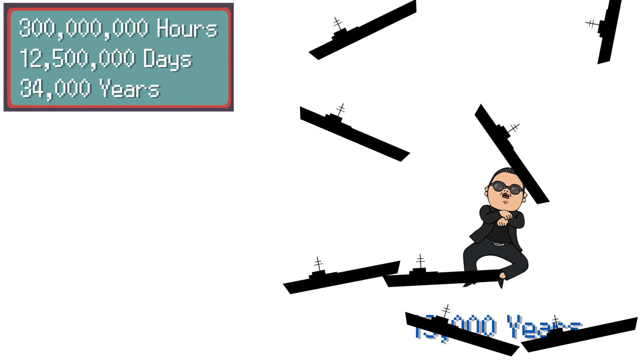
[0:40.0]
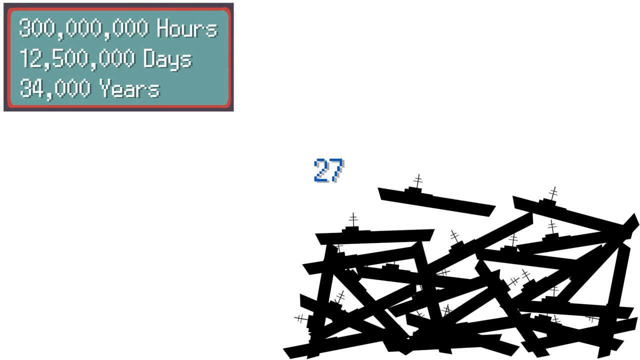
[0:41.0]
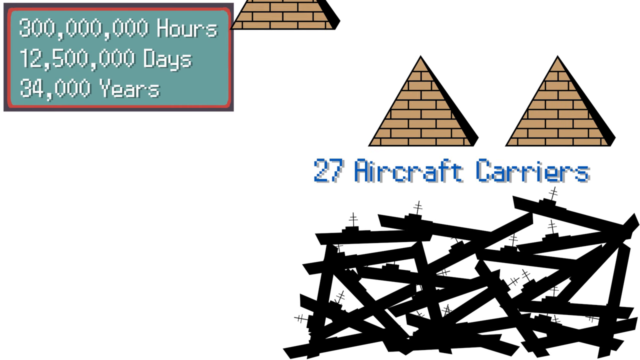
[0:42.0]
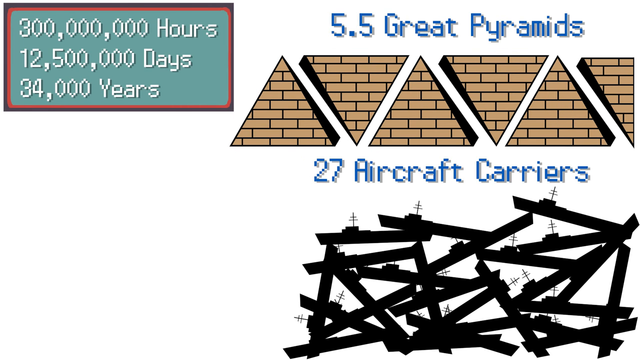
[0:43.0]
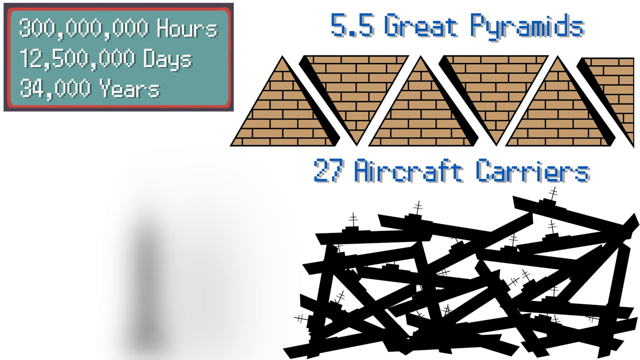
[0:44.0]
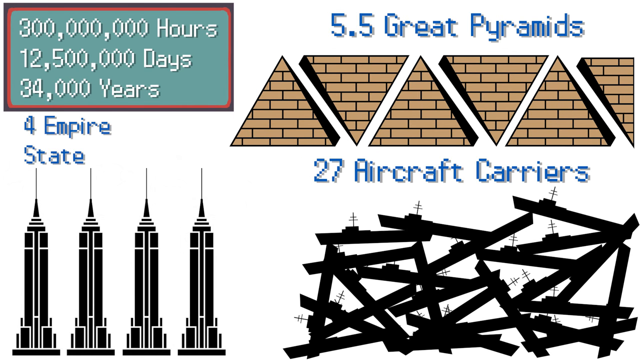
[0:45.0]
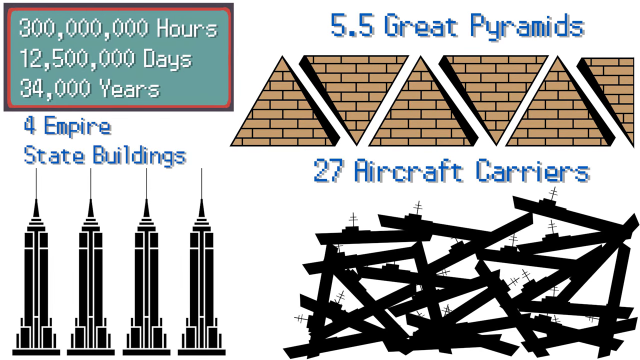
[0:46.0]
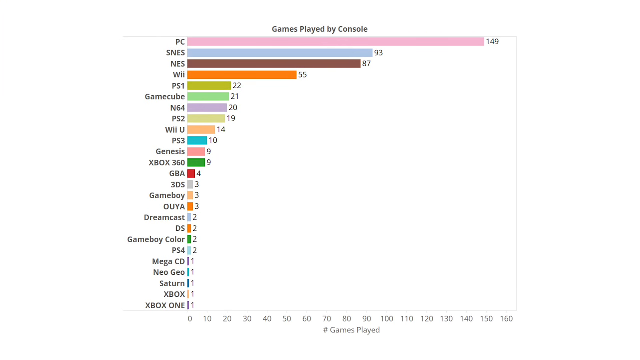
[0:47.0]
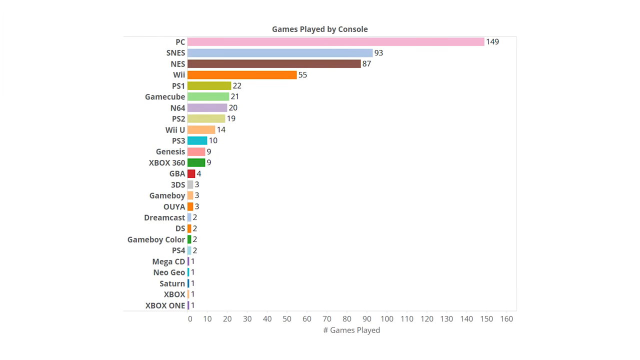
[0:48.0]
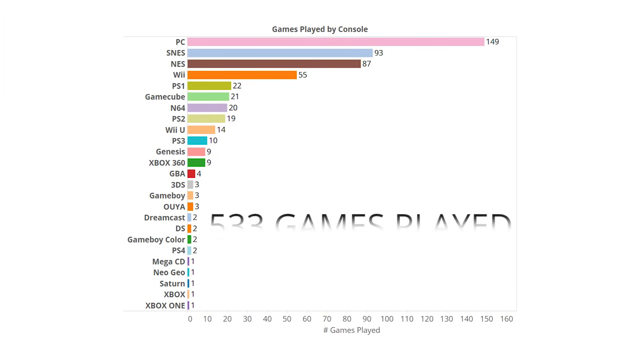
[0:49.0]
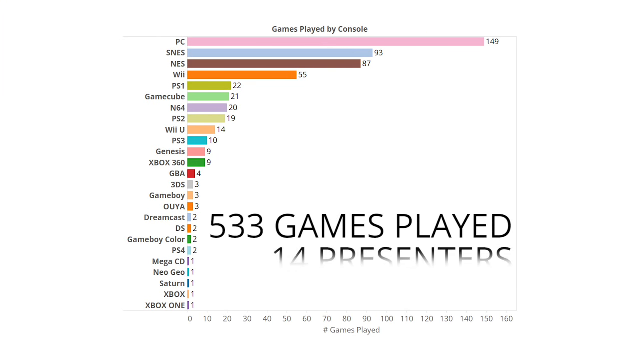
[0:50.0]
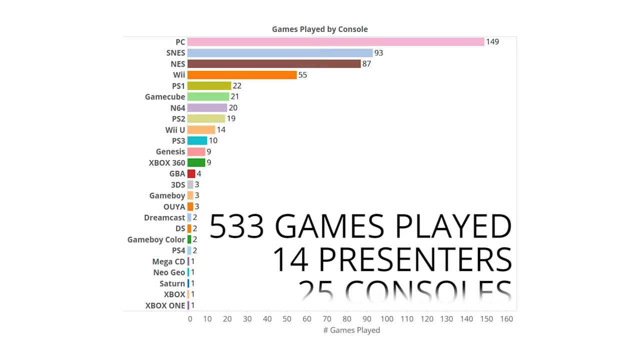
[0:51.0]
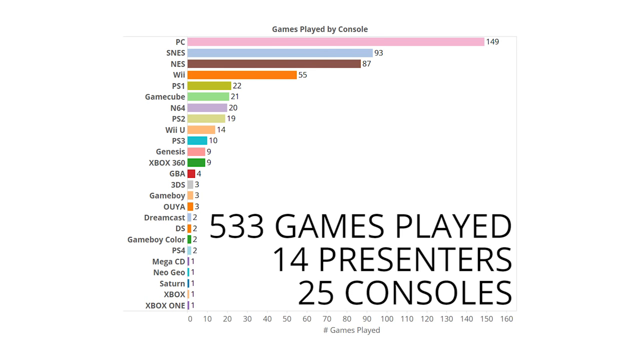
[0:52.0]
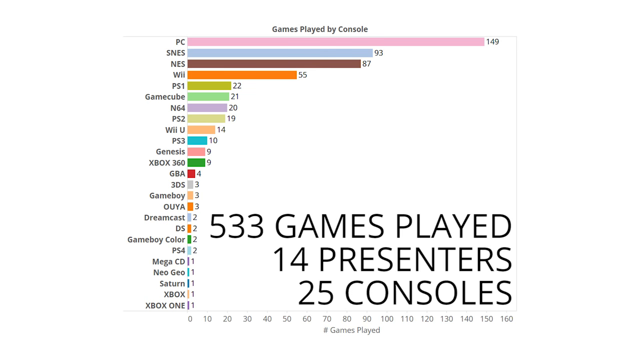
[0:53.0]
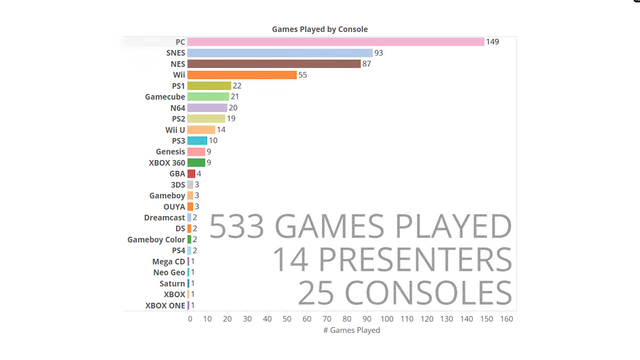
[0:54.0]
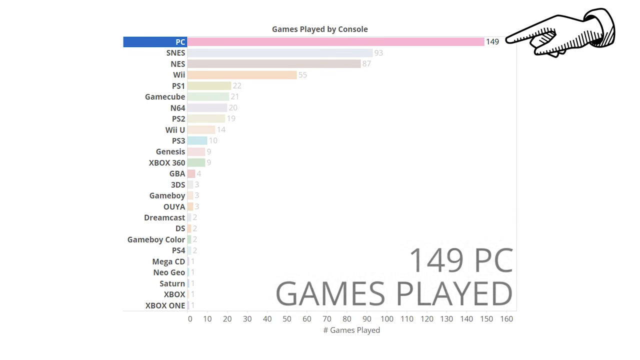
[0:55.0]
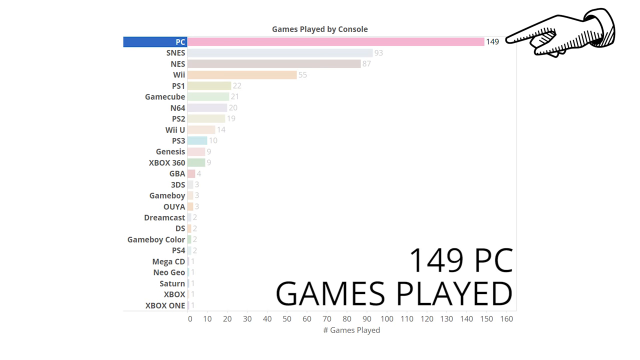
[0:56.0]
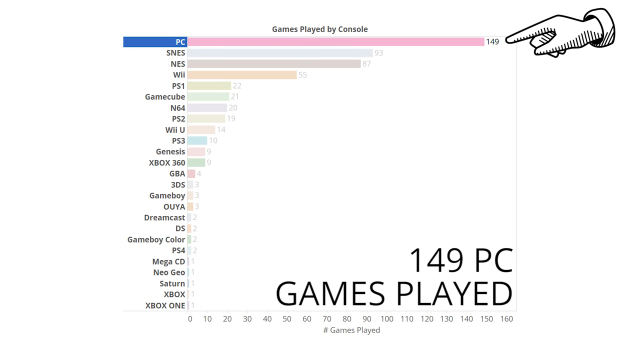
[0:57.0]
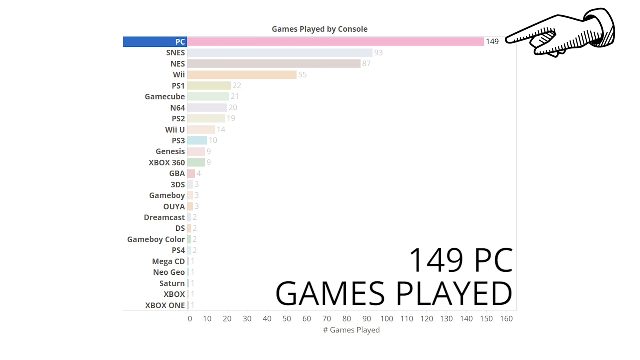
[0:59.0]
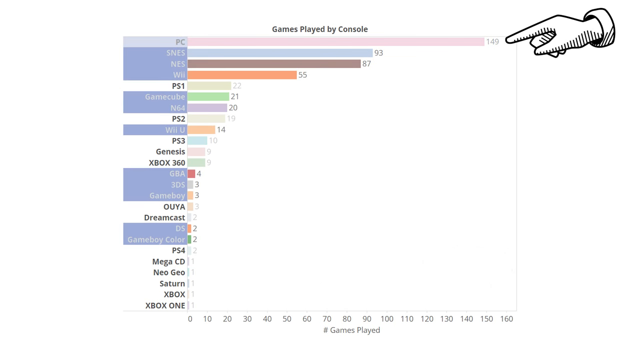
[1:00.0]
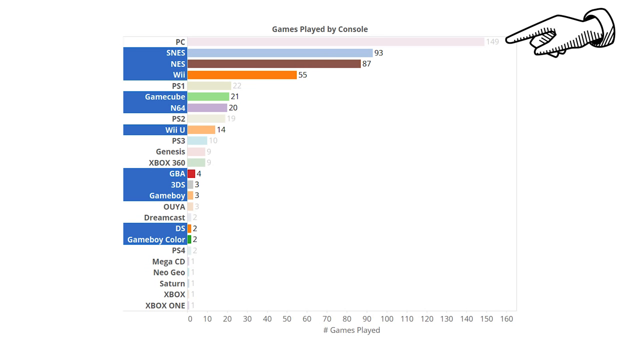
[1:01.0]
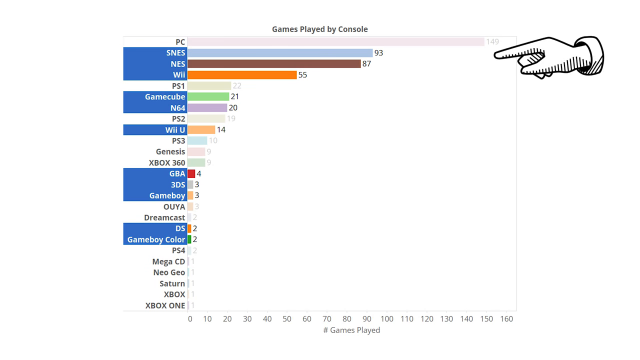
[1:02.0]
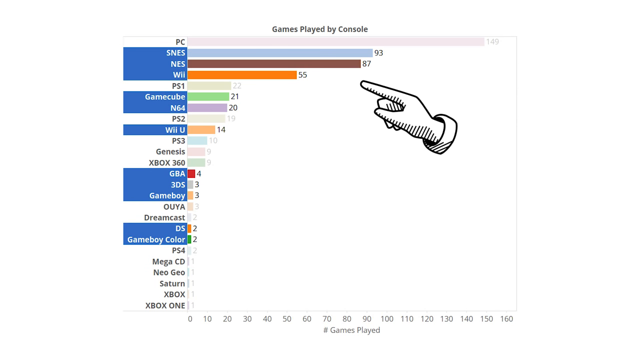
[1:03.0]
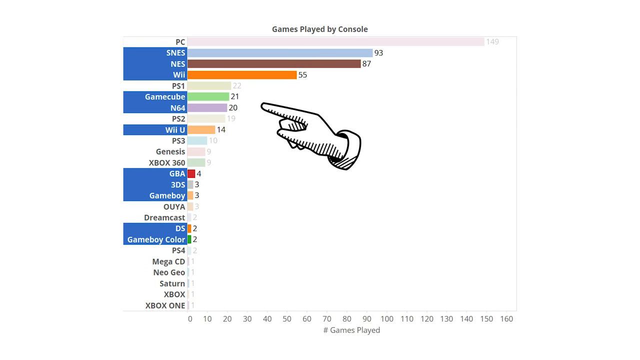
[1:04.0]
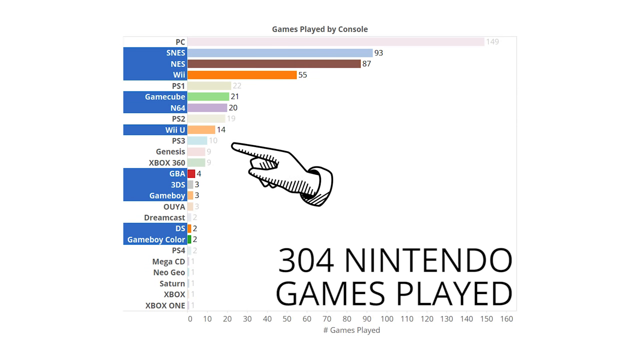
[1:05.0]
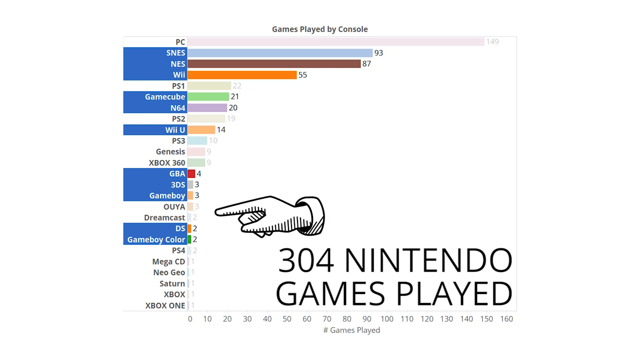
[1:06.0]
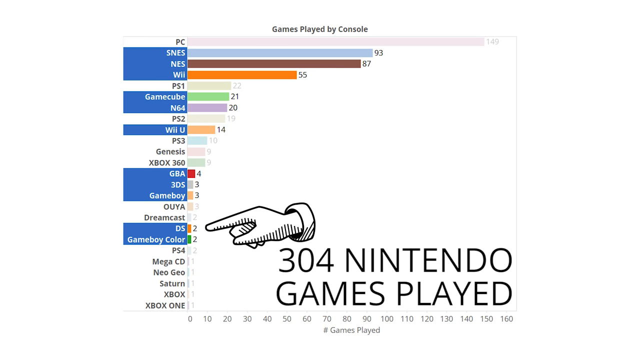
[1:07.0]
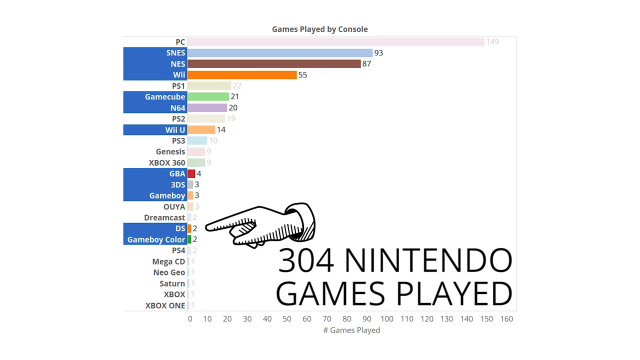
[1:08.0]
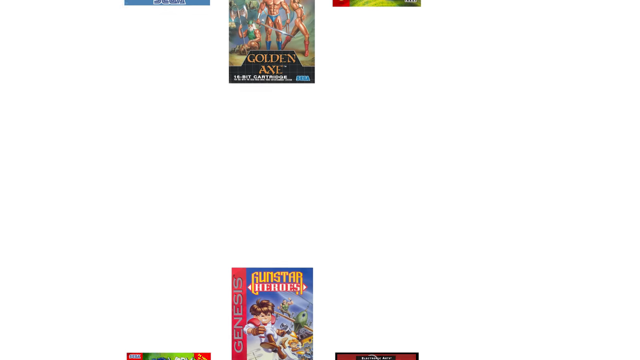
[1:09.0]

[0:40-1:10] The screen shows the fallen long battleships, and on the far left the numbers 300 million hours, 12,500,000 days, and 3,400,000 years are still visible. It then shows 27 air carriers, then 5.5 Great Pyramids, with the pyramids shooting up and down in a pattern, and then four Empire State Buildings. Next comes games played by console, with estimates of PC 149, SNES 93, NES 87, Wii 55, PS1 22, GameCube 21, N64 20, PS2 19, Wii U 14, PS3 10, Genesis 9, Xbox 360 9, GBA 4, 3DS 3, Game Boy 3, Duya 3, Dreamcast 2, DS 2, Game Boy Color 2, PS4 2, Mega CD 1, Neo Geo 1, Saturn 1, Xbox 1, and Xbox One 1. The bars of numbers are colored pink, purple, scarlet, blue, green, yellow, black, red, and white.